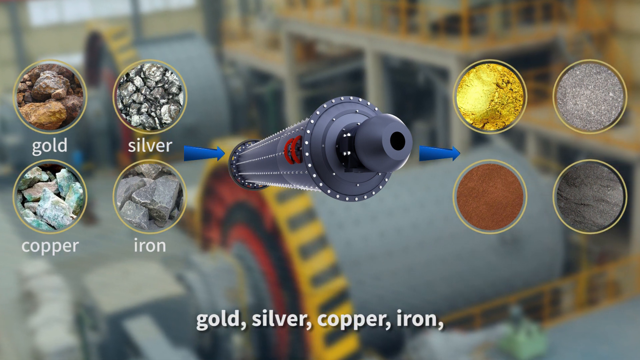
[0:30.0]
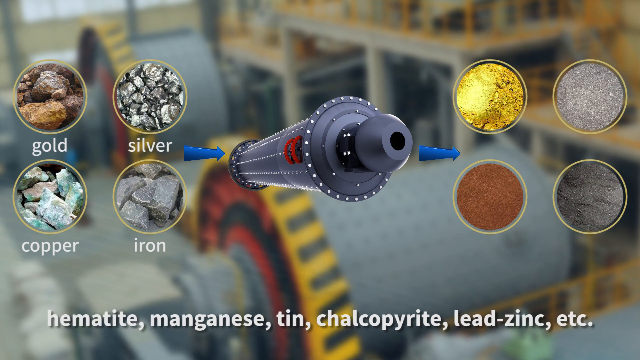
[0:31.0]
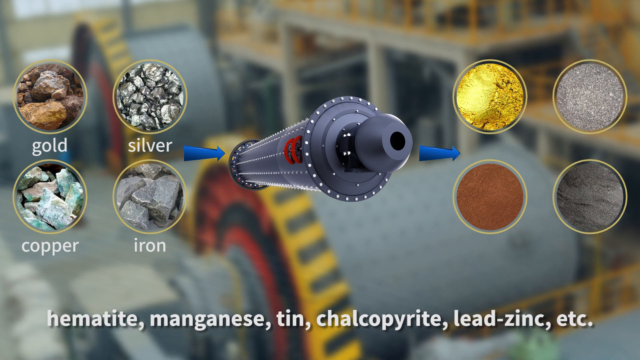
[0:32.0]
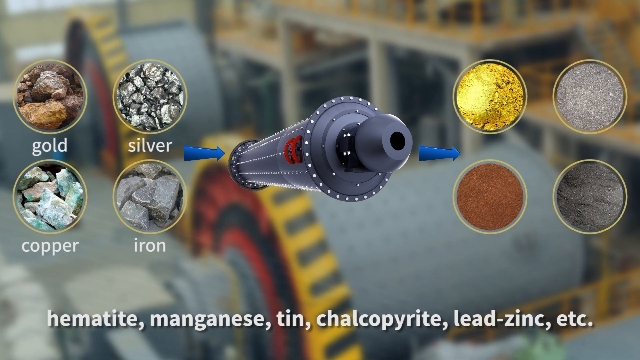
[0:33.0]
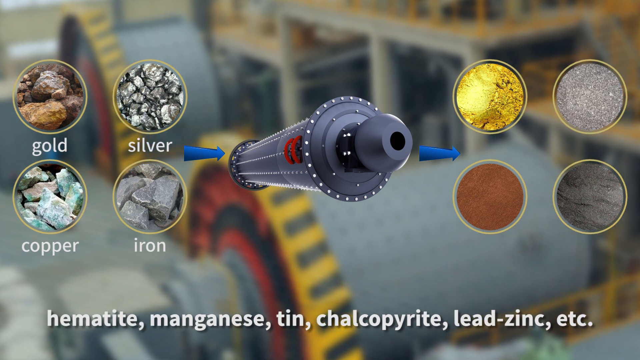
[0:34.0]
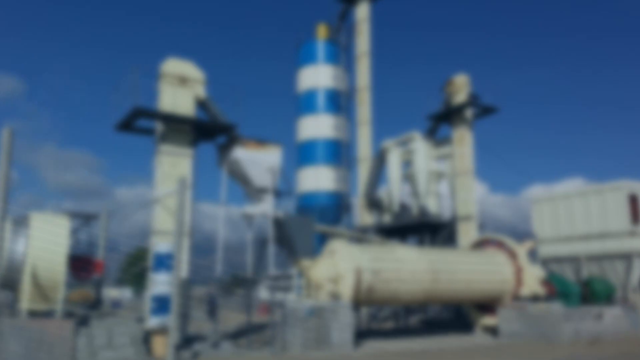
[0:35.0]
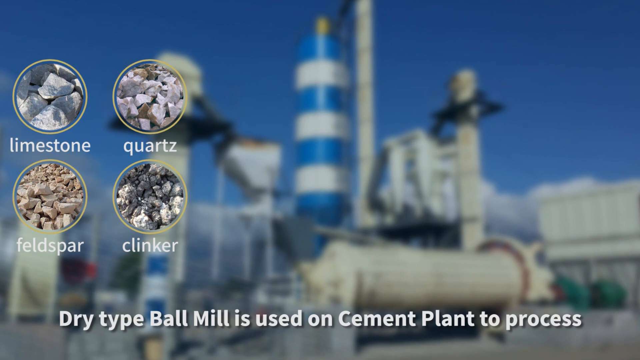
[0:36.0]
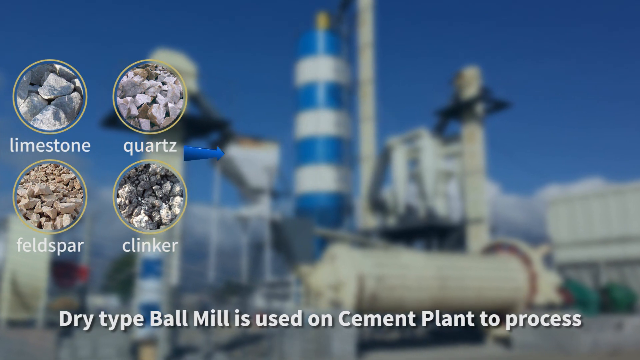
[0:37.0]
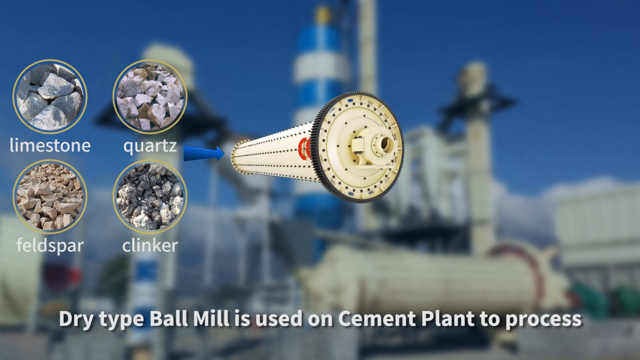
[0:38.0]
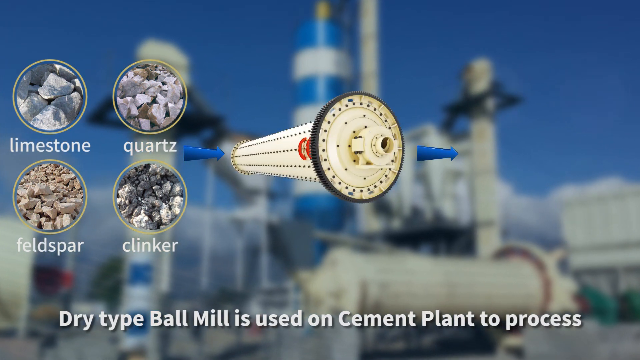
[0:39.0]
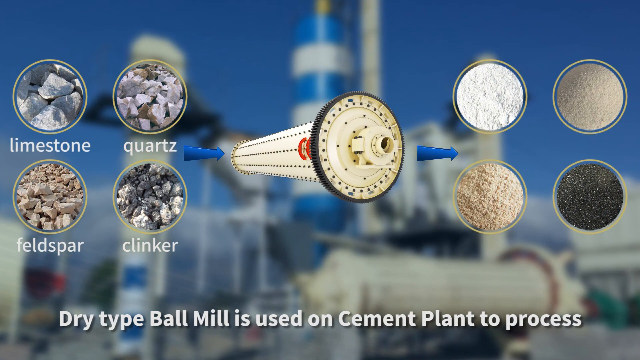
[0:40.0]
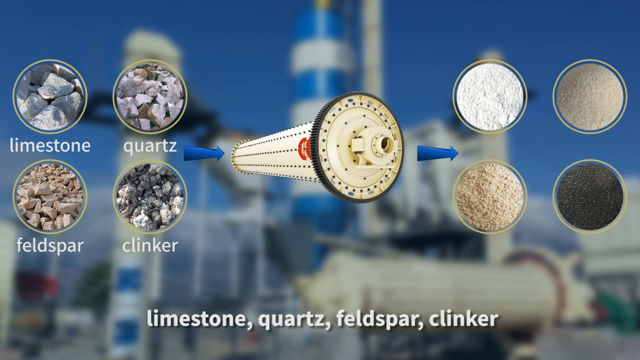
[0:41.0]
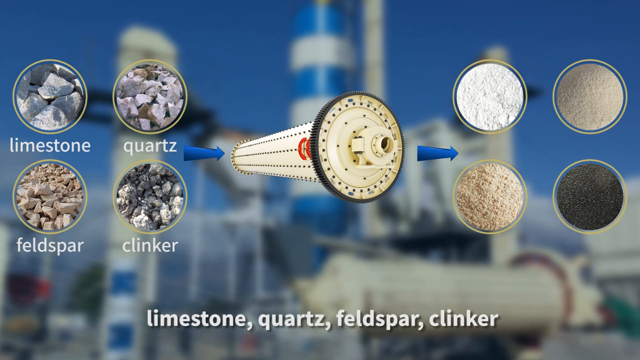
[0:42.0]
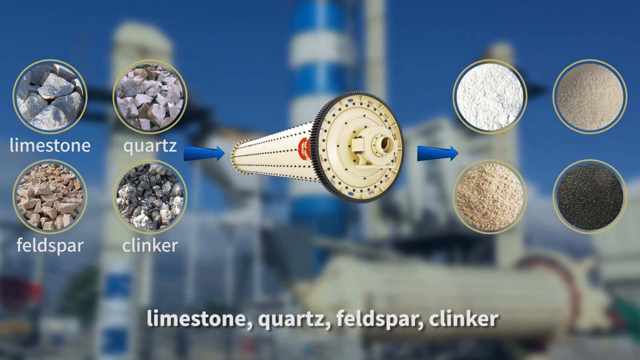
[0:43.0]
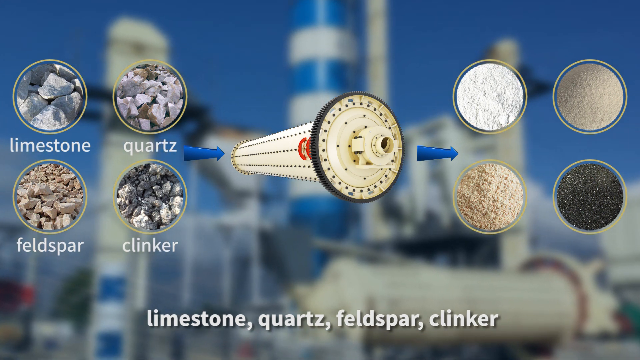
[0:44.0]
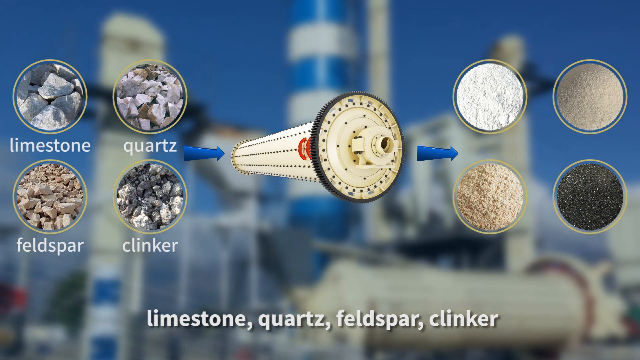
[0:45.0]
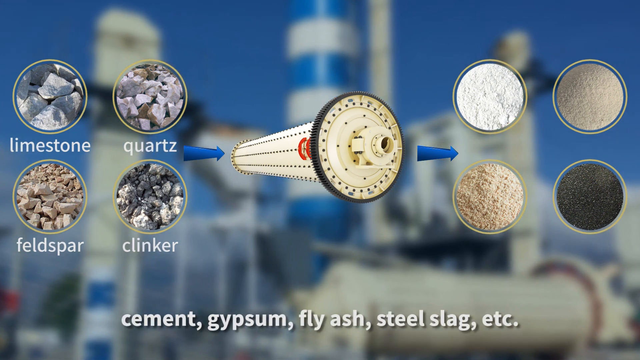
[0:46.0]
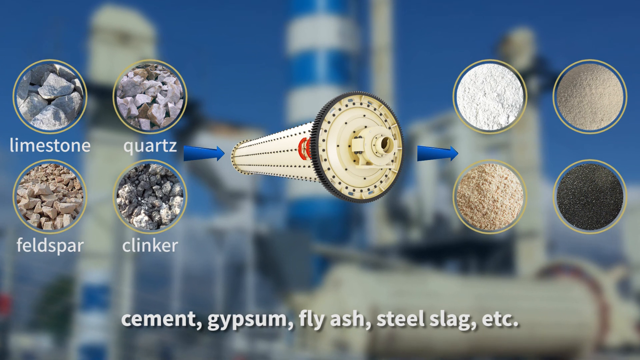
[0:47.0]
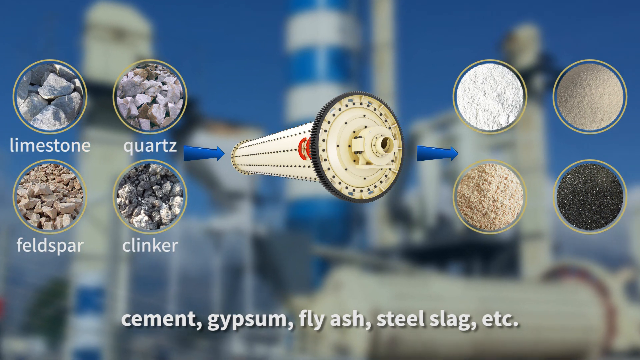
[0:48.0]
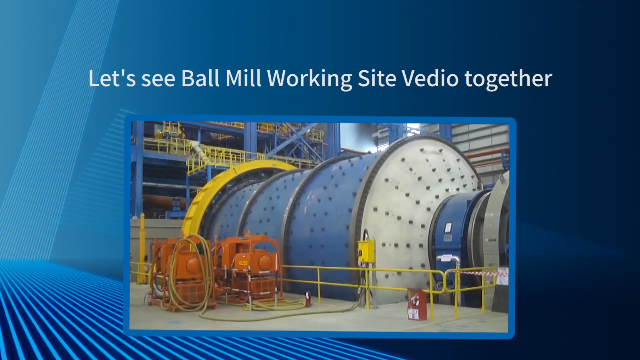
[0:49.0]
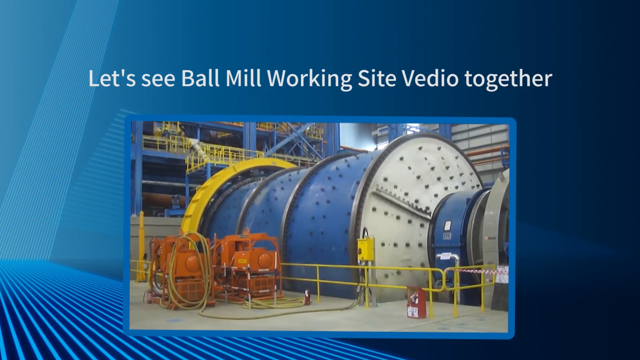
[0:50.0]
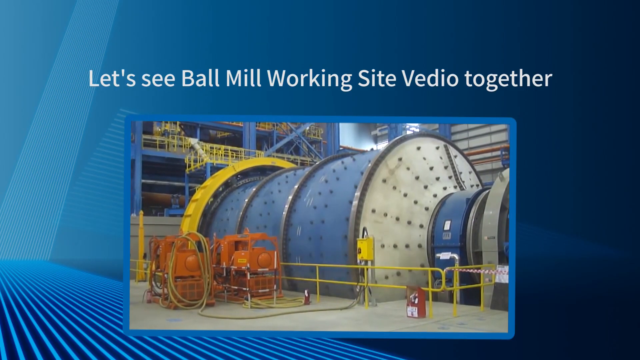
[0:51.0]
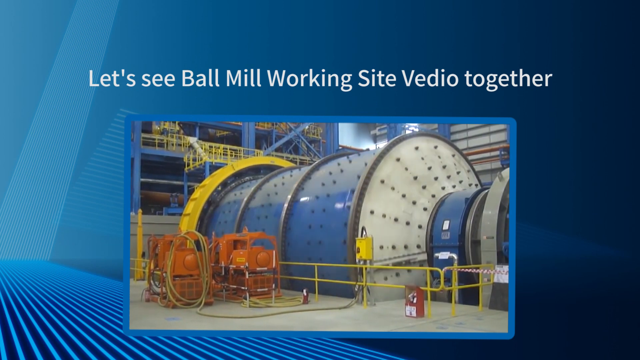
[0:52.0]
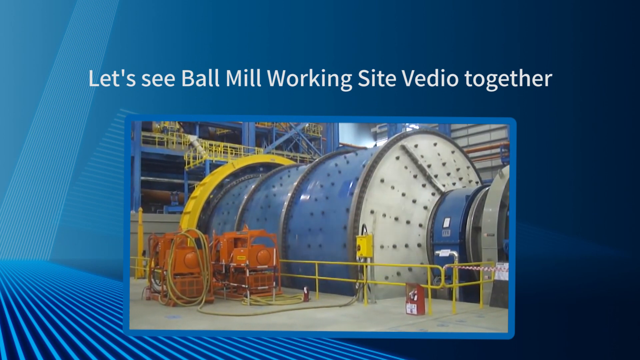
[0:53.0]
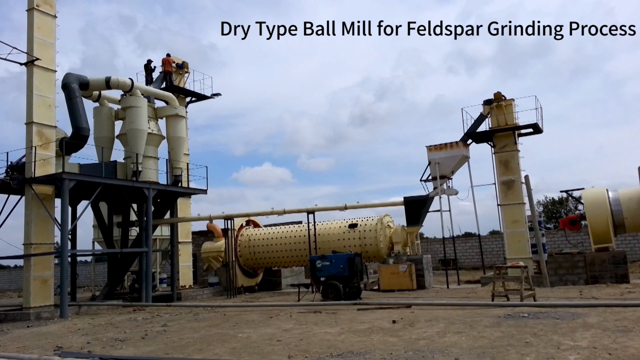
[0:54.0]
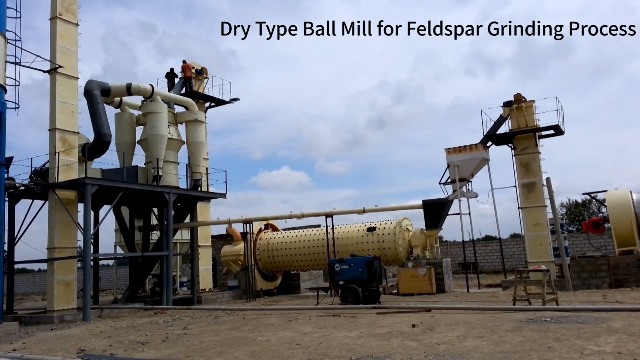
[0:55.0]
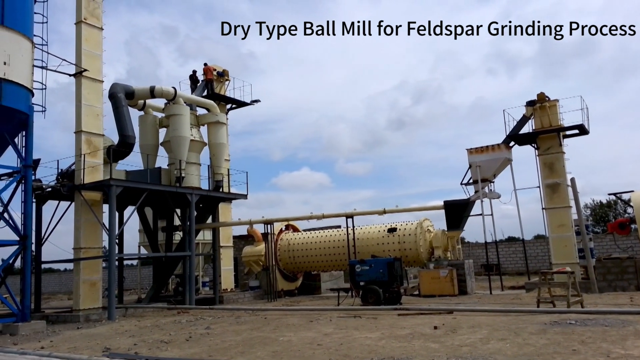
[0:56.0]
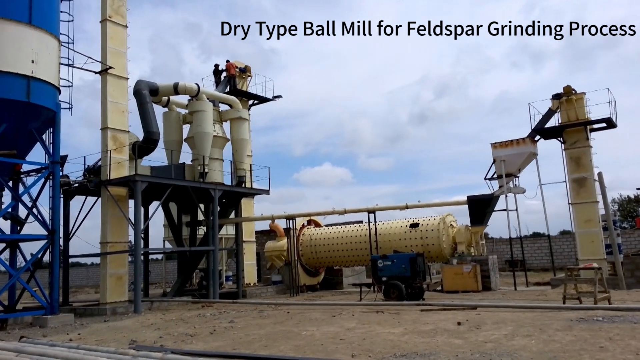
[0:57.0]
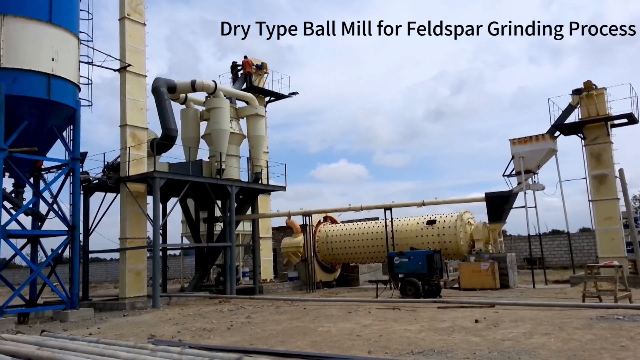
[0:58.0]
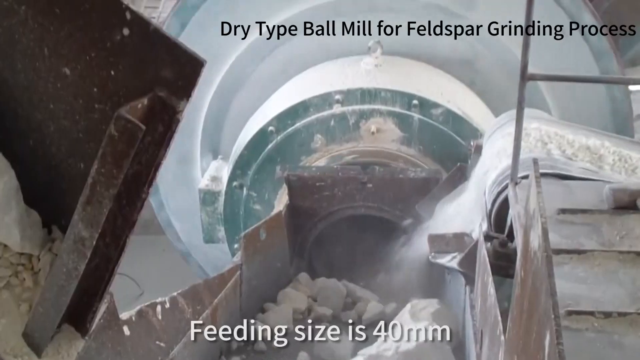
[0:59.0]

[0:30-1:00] Subtitles continue at the bottom of the screen. The mill in the diagram is the gray wet type ball mill, with the ores on one side and the refined metals on the other. This is replaced by another out-of-focus factory picture in the background, this time showing the outside of a factory rather than the inside. In focus is a diagram: on the left are the ores limestone, quartz, feldspar, and clinker, the dry type ball mill is in the middle with arrows showing the ores going in, and on the other side are the powdered, refined versions, with subtitles again at the bottom. The video then returns to the blue background, now with a video in the middle of the screen and white text at the top reading "let's see ball mill working site to video together". A giant, massive ball mill is shown rolling, followed by a picture of a ball mill outside. In the top right, it is indicated that this is a dry type for the feldspar grinding process, and videos show it working.